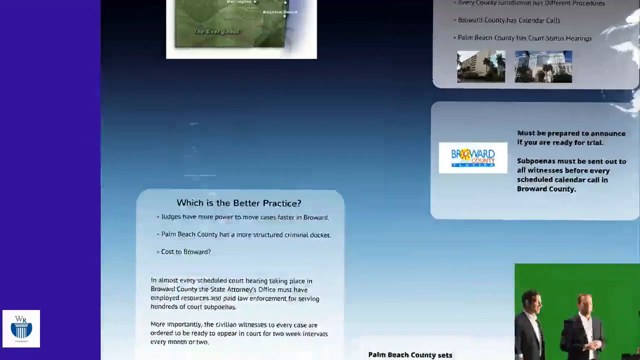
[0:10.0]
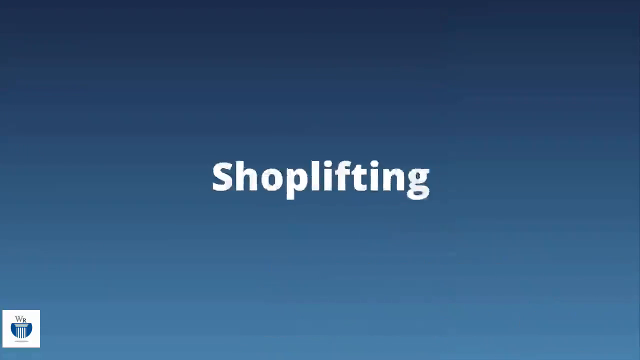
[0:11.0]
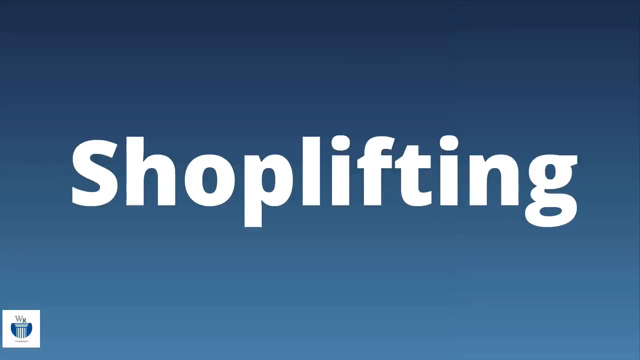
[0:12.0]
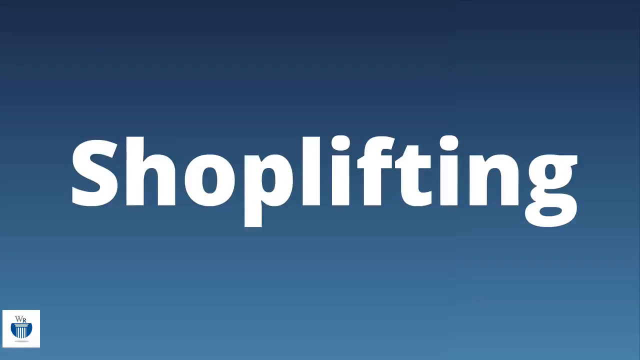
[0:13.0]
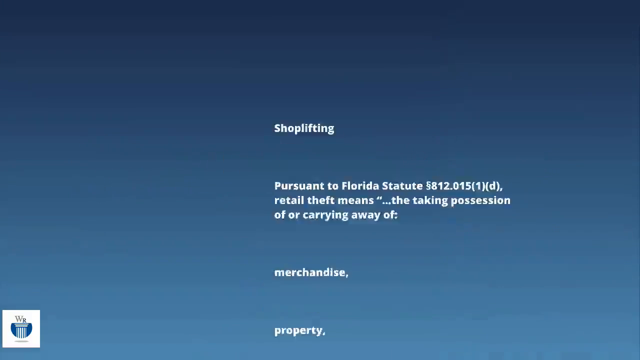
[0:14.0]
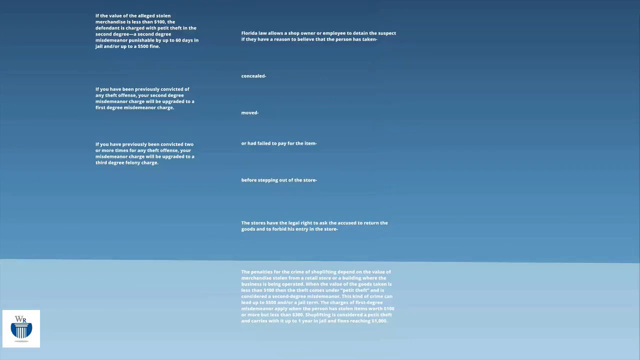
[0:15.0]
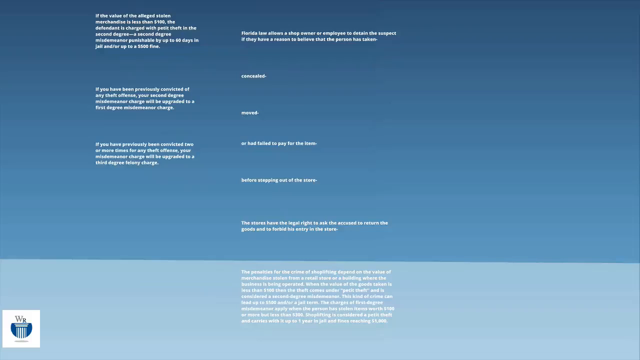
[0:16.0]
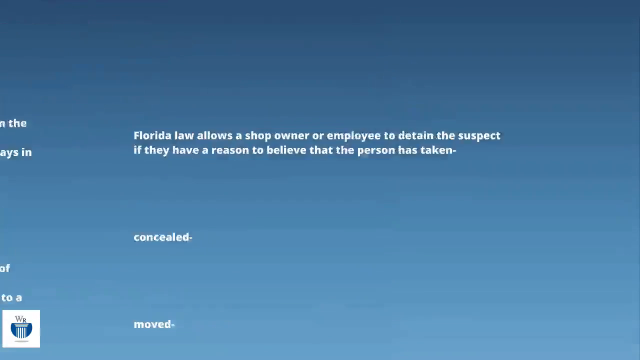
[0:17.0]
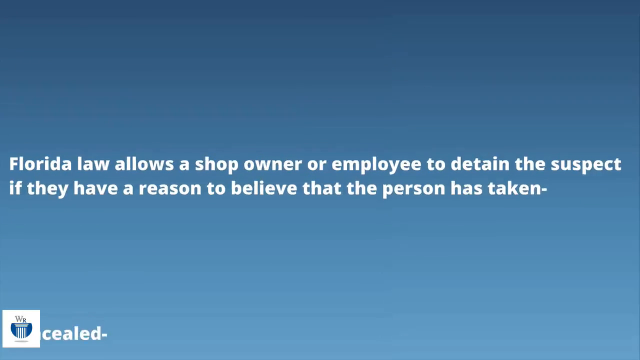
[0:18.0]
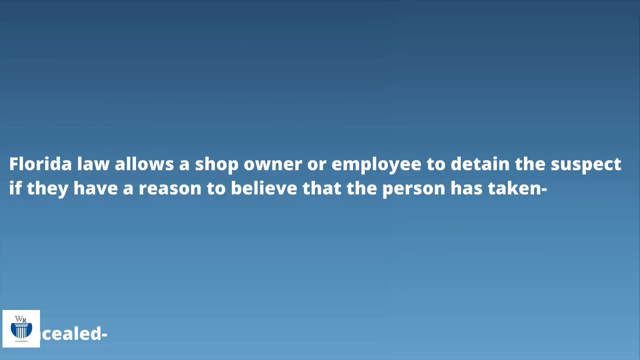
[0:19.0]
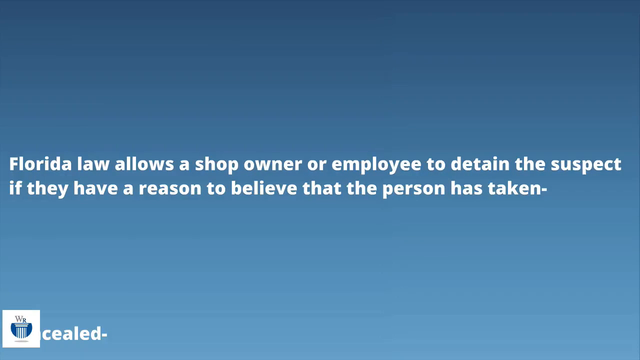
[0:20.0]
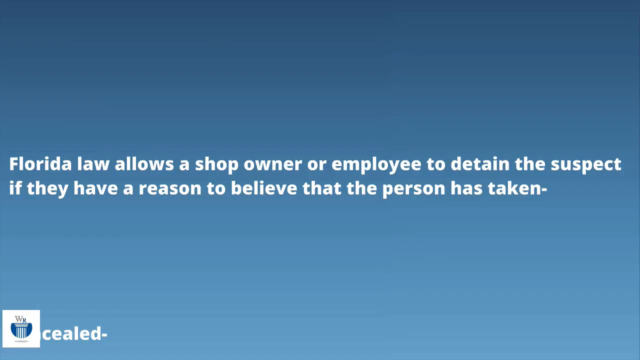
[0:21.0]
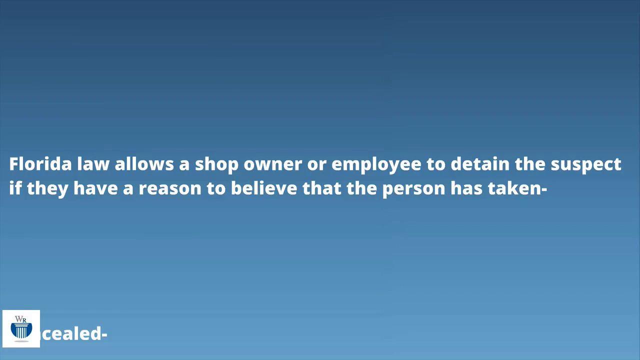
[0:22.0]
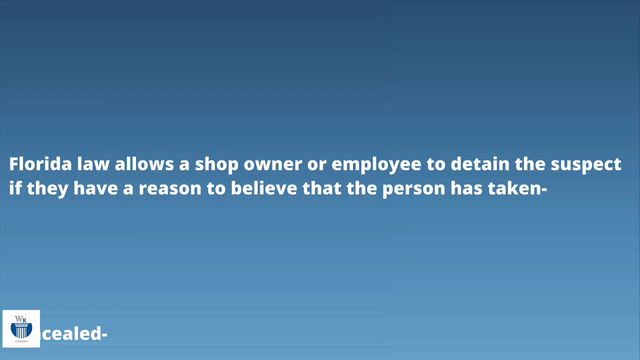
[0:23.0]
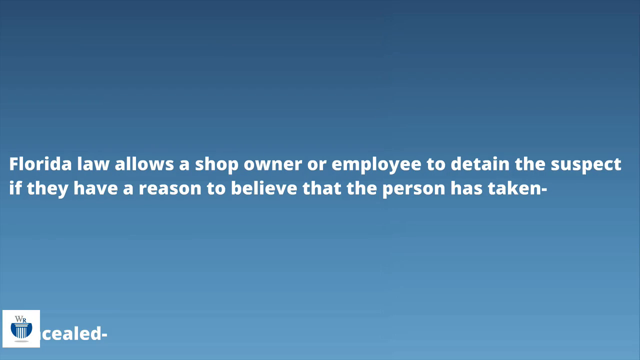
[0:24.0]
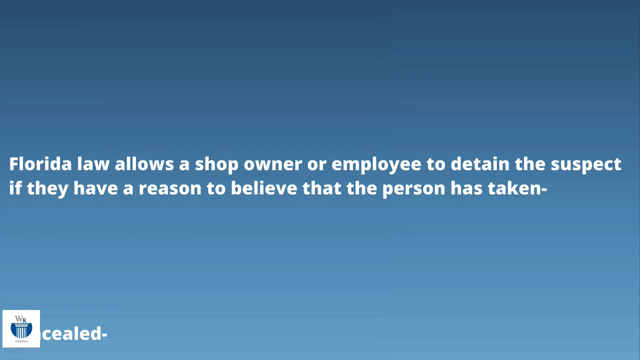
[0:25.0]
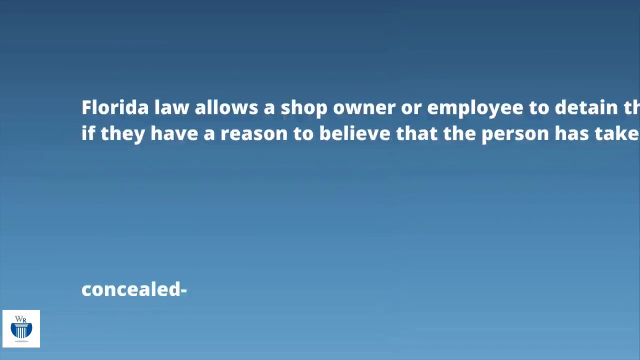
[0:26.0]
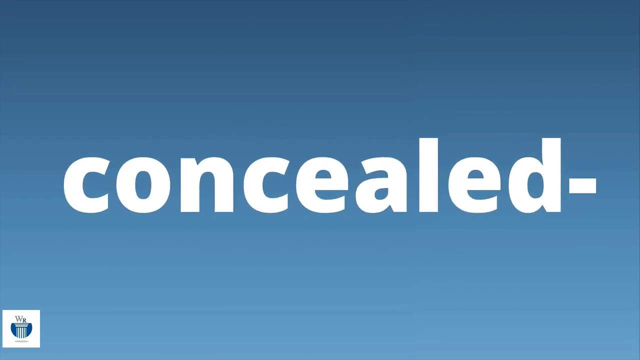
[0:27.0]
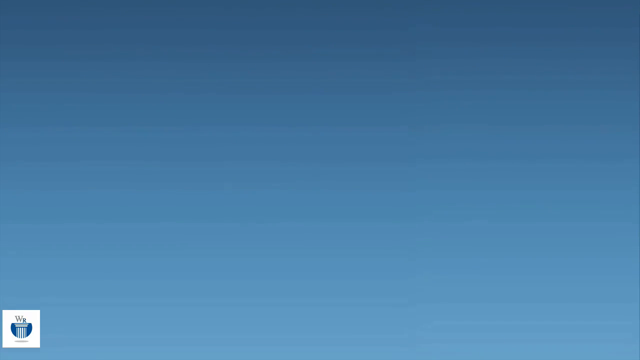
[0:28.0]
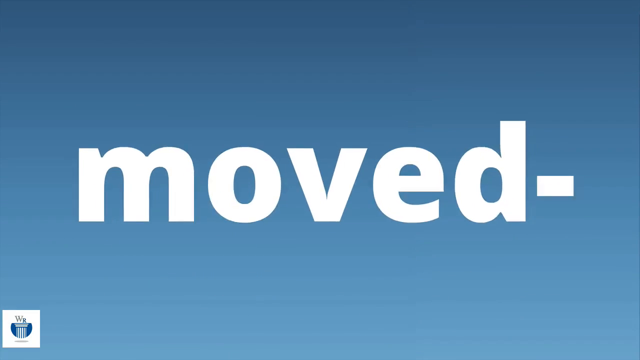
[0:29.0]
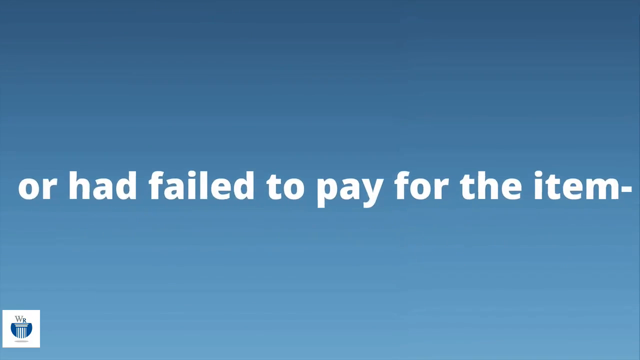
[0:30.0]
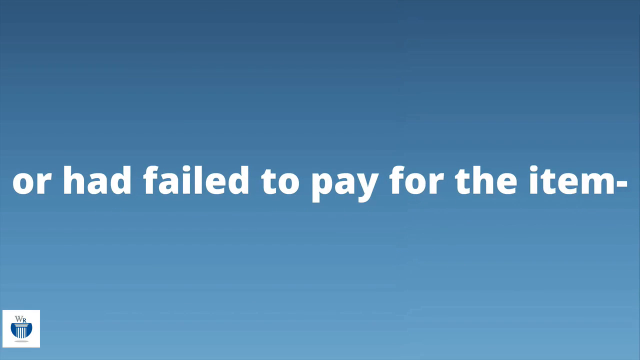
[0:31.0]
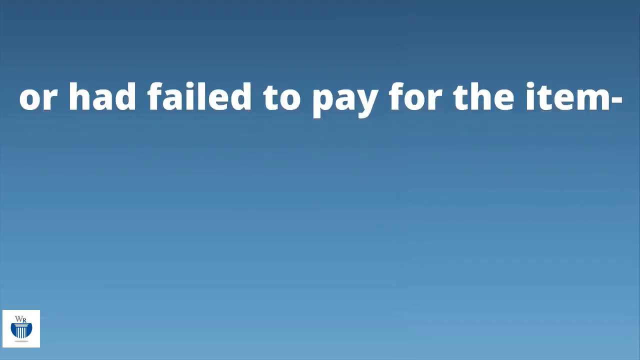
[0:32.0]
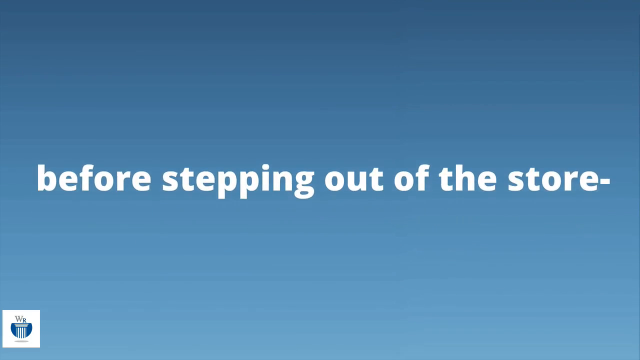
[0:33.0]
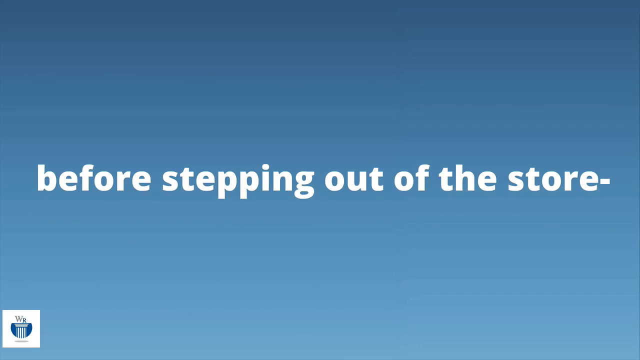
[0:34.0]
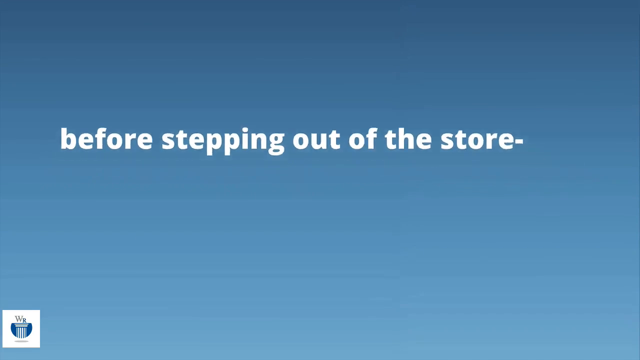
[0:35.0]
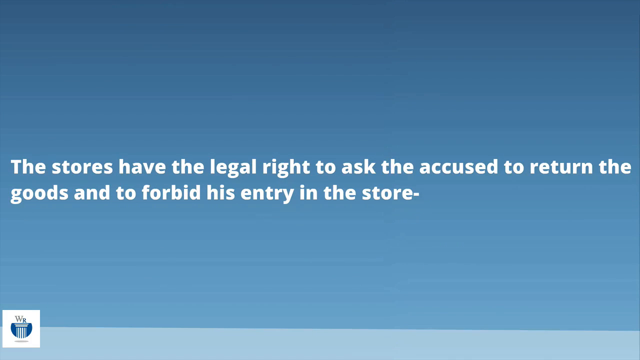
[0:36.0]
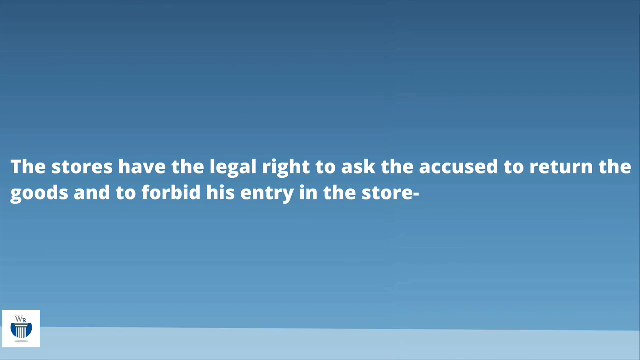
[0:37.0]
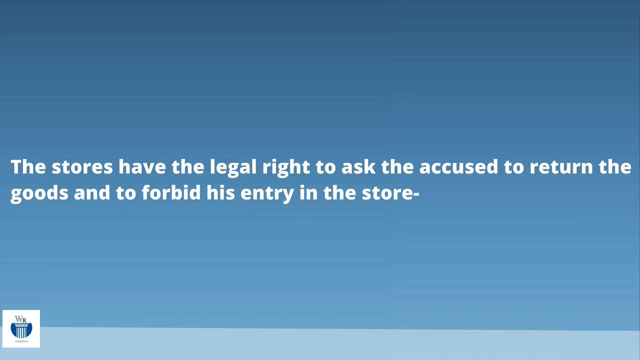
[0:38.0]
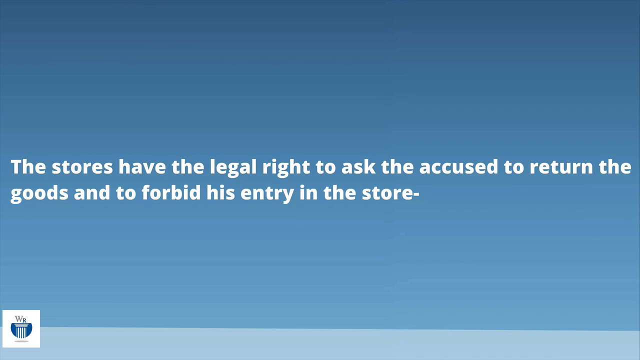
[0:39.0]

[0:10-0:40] Against a blue background, a question at the bottom of the frame reads "which is the better practice?" On the right-hand side is an ad for Broward County, and at the bottom, on a green background, are two gentlemen in black suits. The word "shoplifted" appears in bold lettering, followed by smaller text citing the law: "Florida law allows a shop owner or employee to detain the suspect if they have a reason to believe that the person has taken." The next word, in white lettering on the blue screen, is "concealed," followed by "moved or had failed to pay for the item before stepping out of the store." Then the text reads "the stores have the legal right to ask the accused to return the goods and to forbid his entry in the store." The text seems to give more information about Florida law and what store owners may and may not do when they find someone stealing in their store.